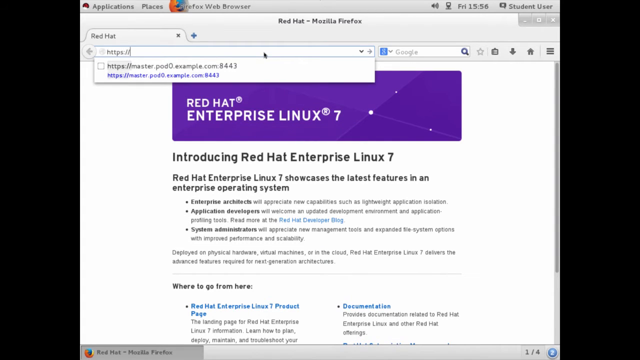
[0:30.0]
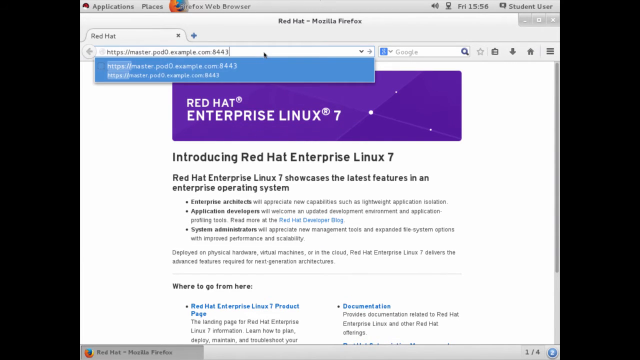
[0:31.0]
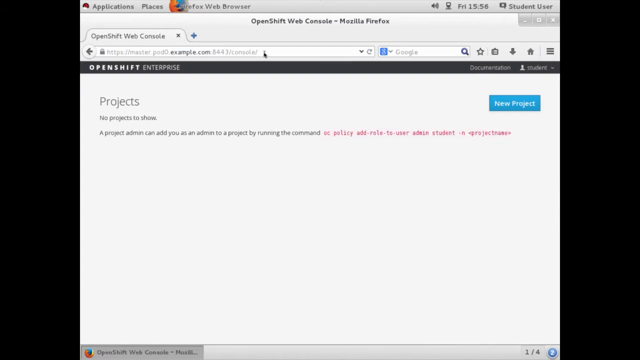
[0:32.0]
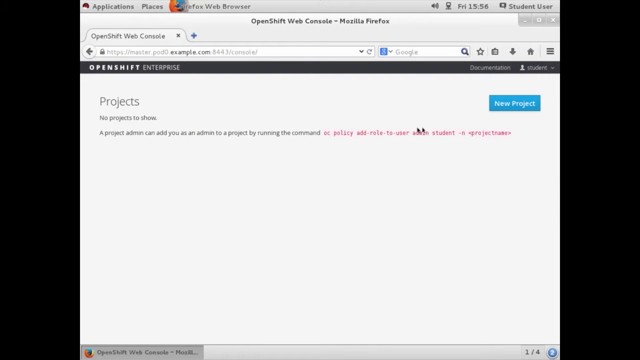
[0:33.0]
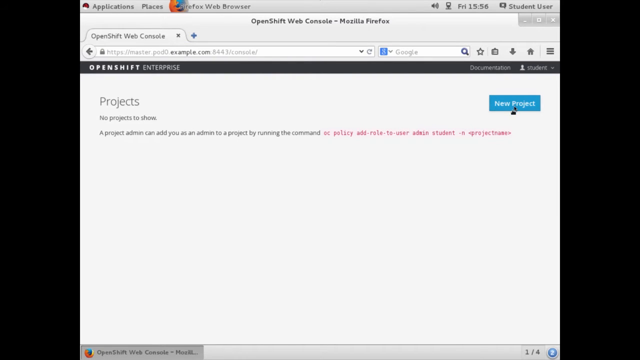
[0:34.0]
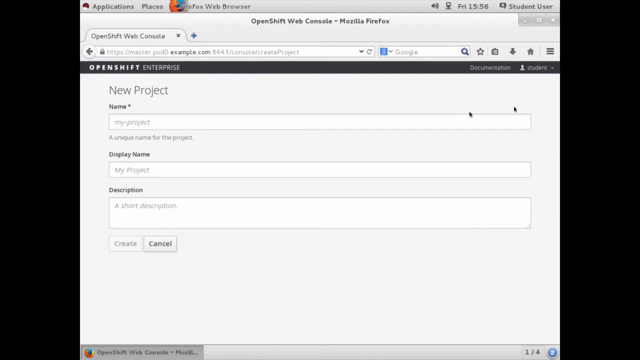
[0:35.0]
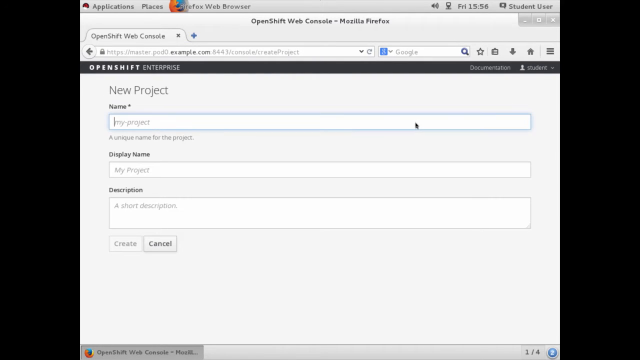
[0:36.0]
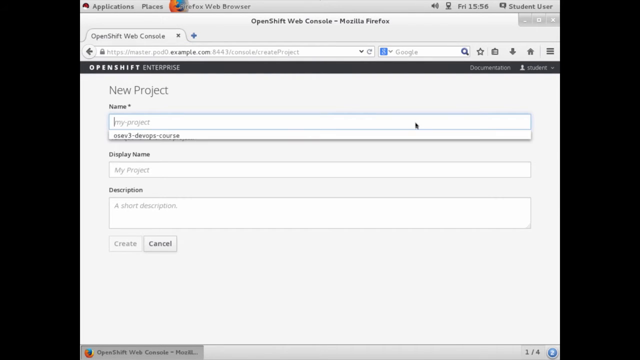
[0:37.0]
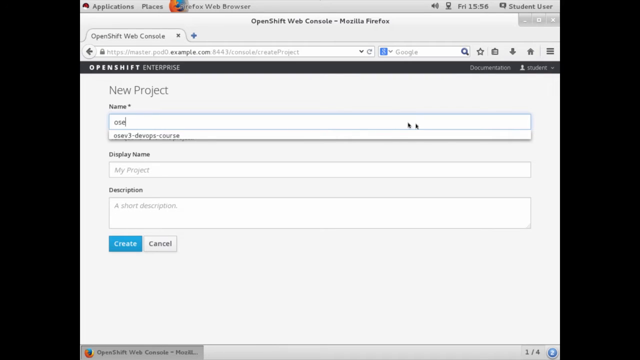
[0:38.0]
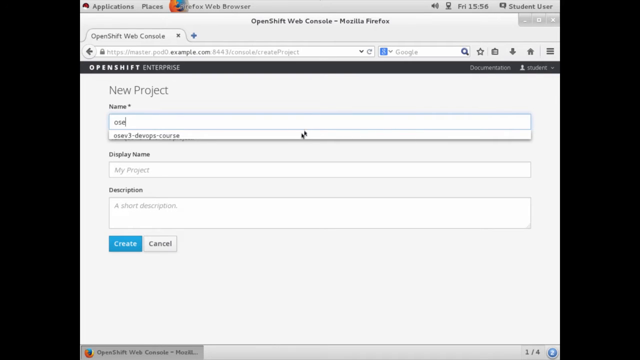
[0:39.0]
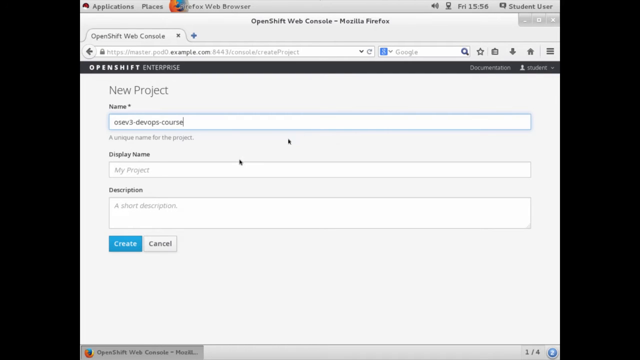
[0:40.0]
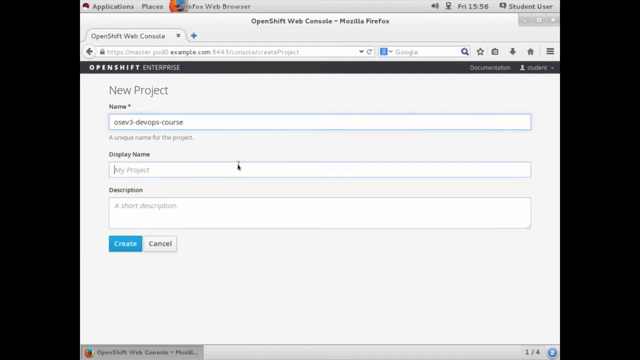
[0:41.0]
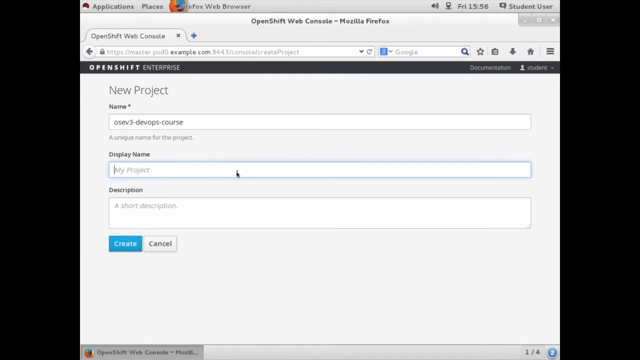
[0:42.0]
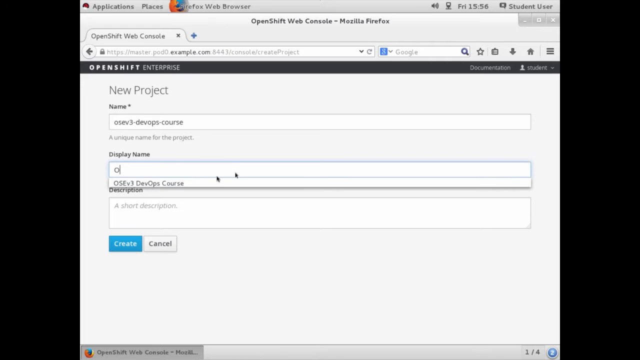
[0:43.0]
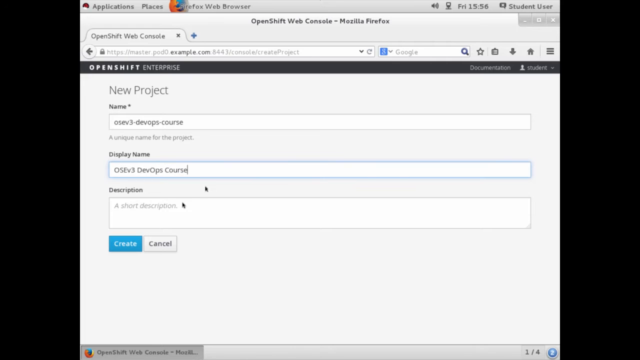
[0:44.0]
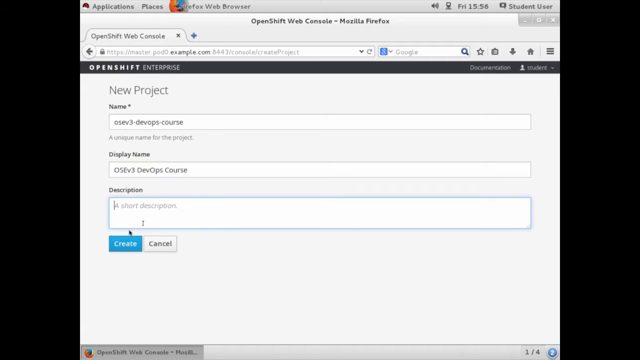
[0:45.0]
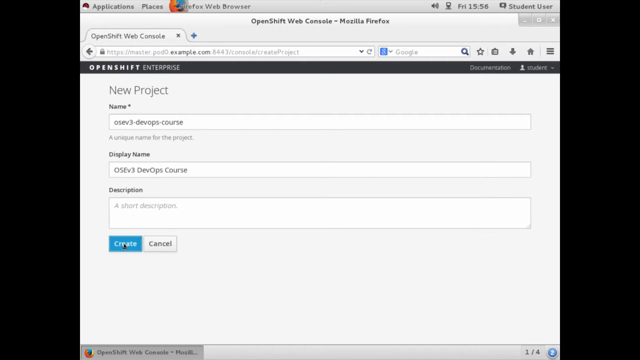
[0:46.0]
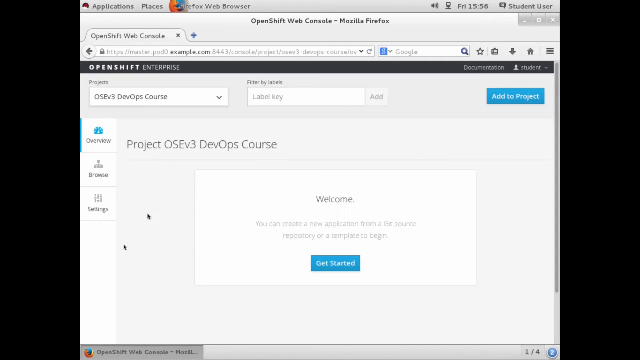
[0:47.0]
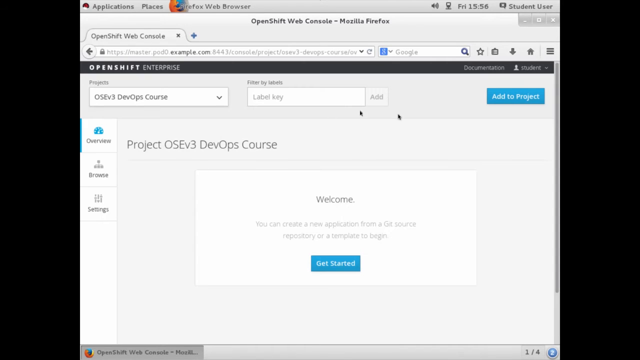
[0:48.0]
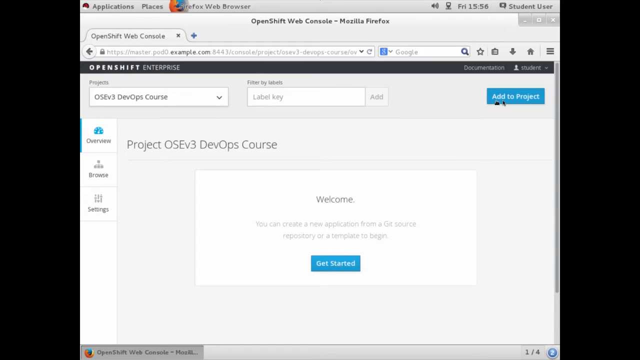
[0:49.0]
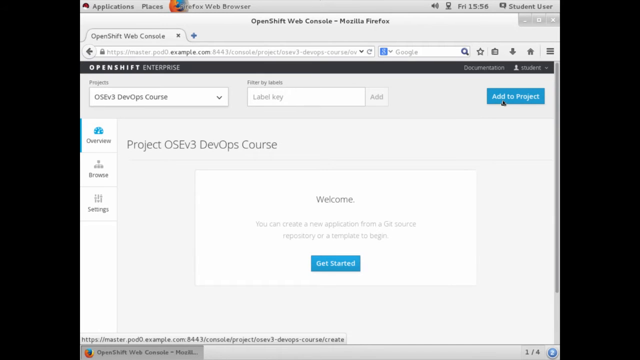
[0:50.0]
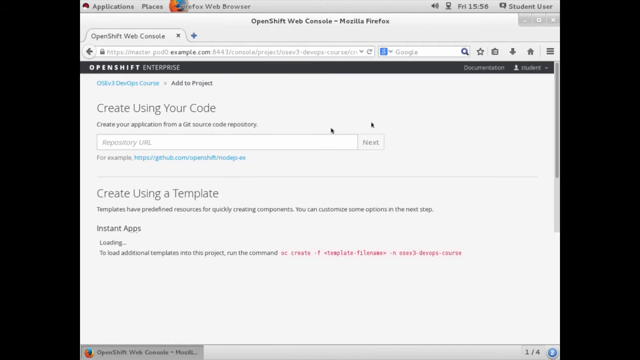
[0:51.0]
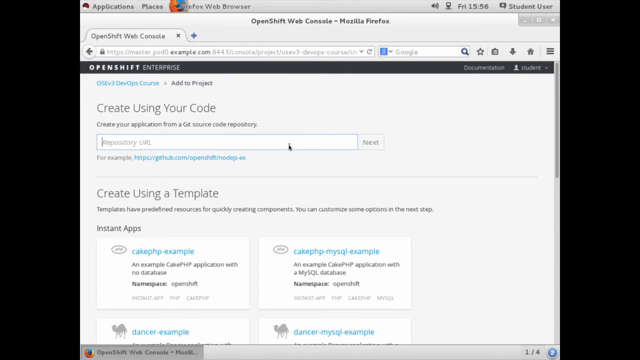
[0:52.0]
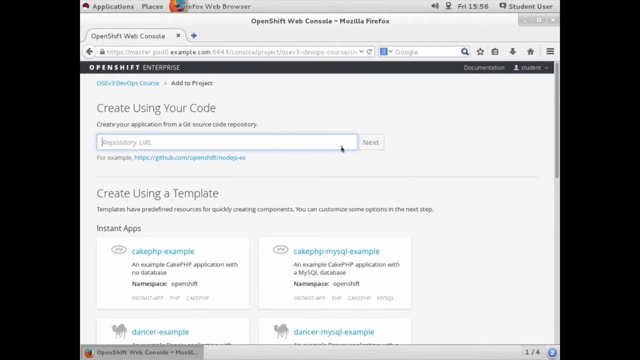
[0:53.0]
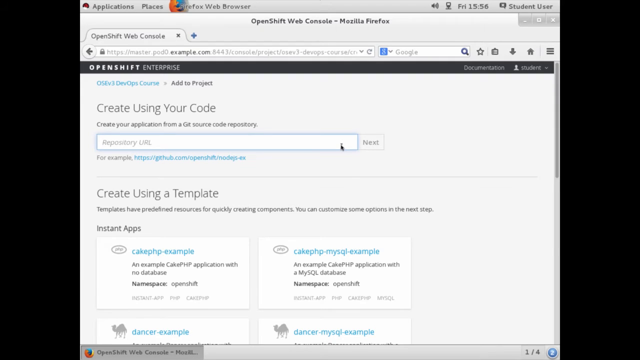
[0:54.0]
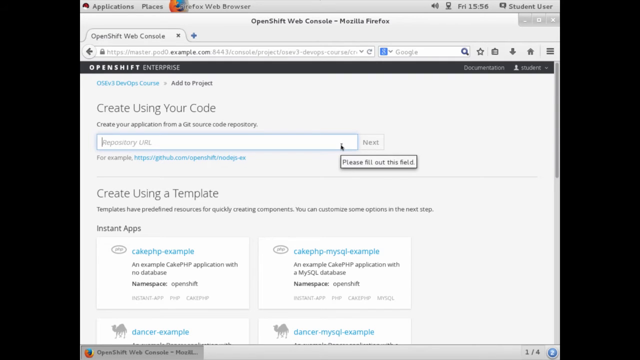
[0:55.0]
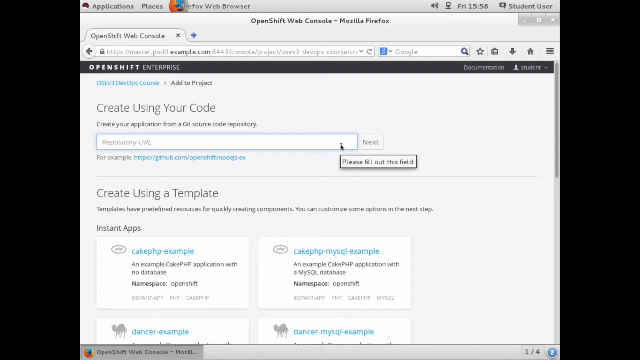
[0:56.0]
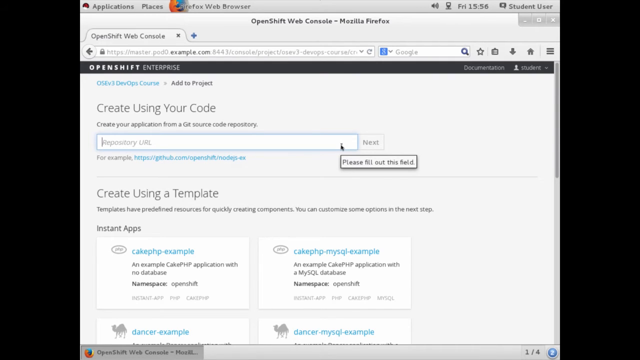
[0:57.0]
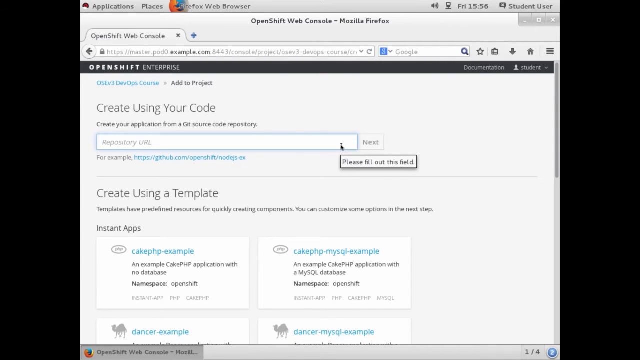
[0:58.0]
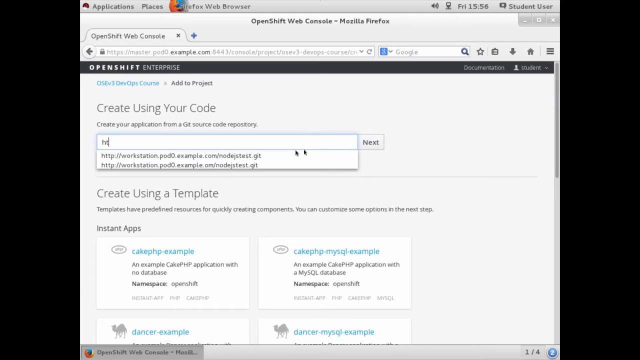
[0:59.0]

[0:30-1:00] In a recording of a computer screen, the user has the Firefox web browser open and types in a URL that includes "pod0.example.com". A new webpage called OpenShift Web Console opens. It is a blank white page with text that reads "projects, no projects to show" and "The project admin can add you as an admin to a project by running the command" followed by a command. A blue button reading "new project" is on the top right of the page. The user moves the mouse to that button and clicks it, opening a new page that reads "new project" at the top. The page has three text boxes: the topmost reads "name", the second "display name" and the third "description". Under the description box are two buttons, "create" and "cancel". The user clicks the name box, which shows a dropdown history, types the first three letters of the first option, "OSEV3-DEVOPS-course", and clicks that option, which autofills it into the box. They then click display name and type "O", which shows a history with a single option reading "OSEV devops course", and click it to fill the box. They click the description box once without typing anything, then click the blue "create" button.